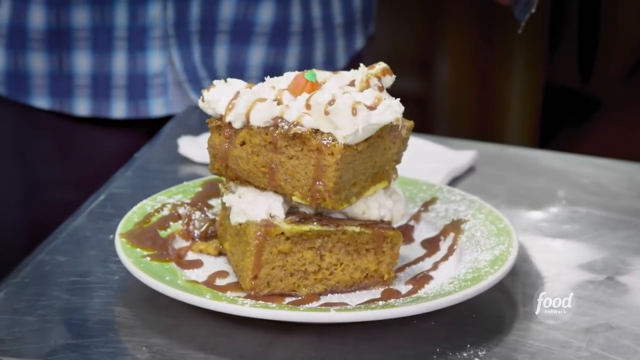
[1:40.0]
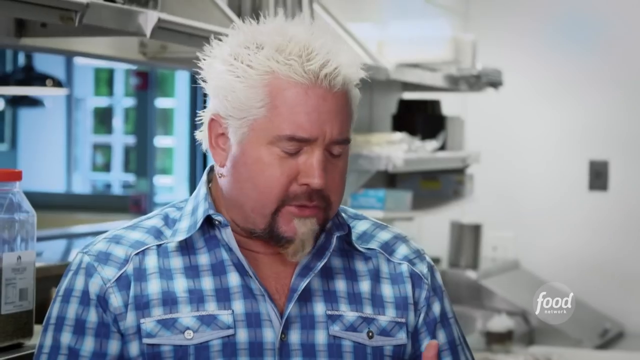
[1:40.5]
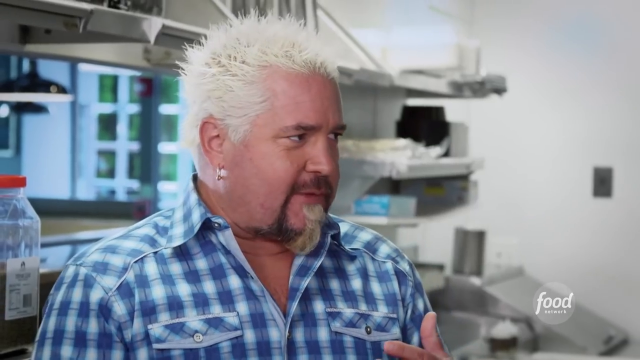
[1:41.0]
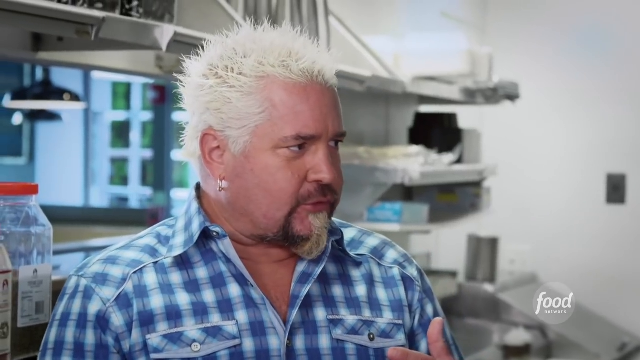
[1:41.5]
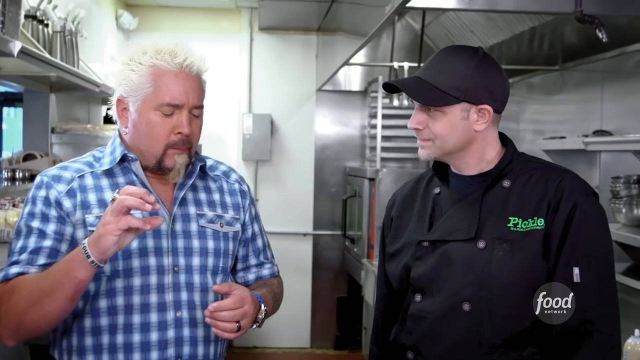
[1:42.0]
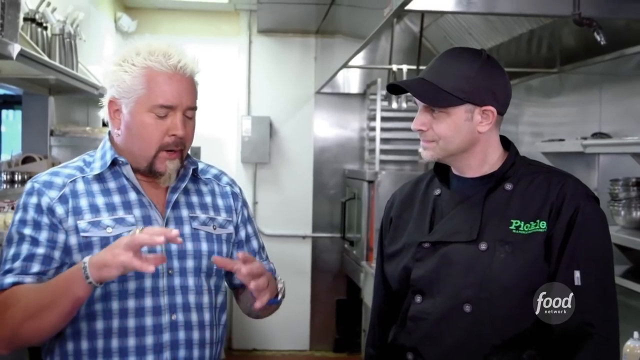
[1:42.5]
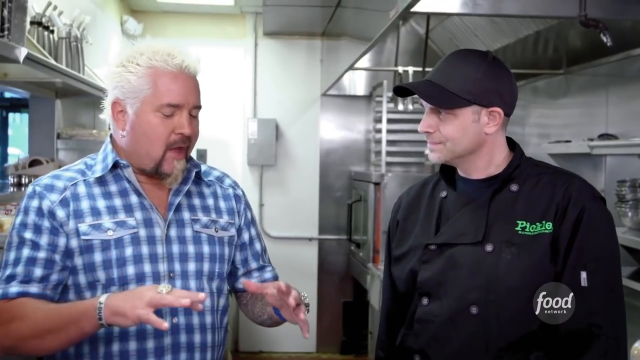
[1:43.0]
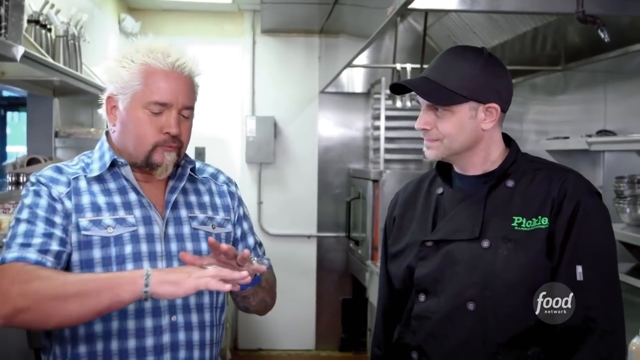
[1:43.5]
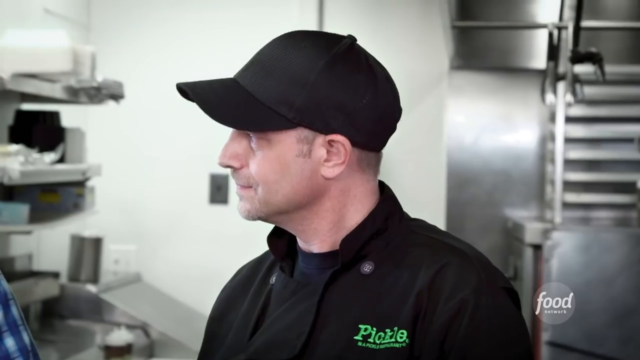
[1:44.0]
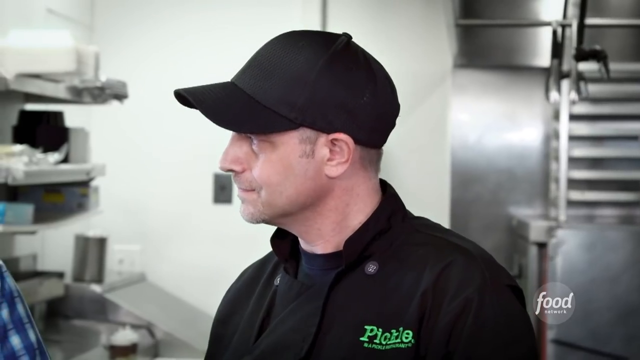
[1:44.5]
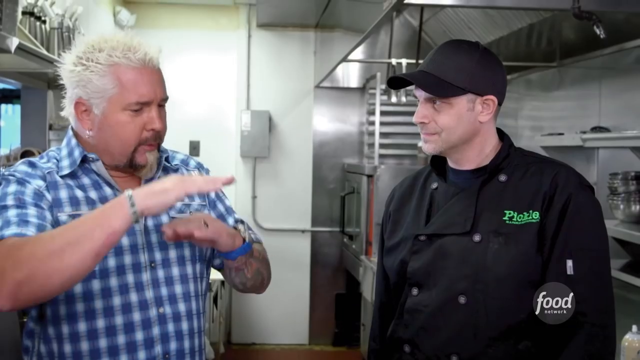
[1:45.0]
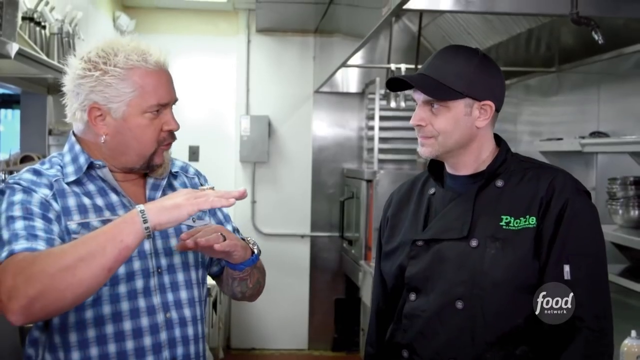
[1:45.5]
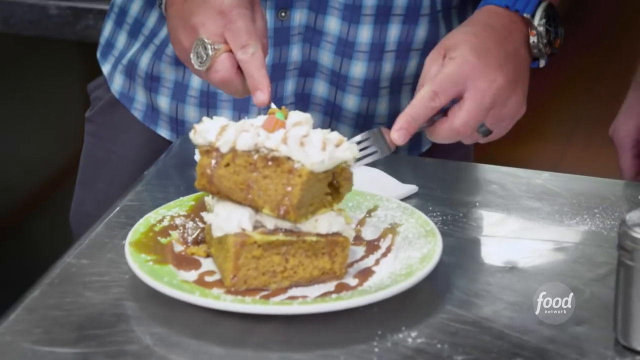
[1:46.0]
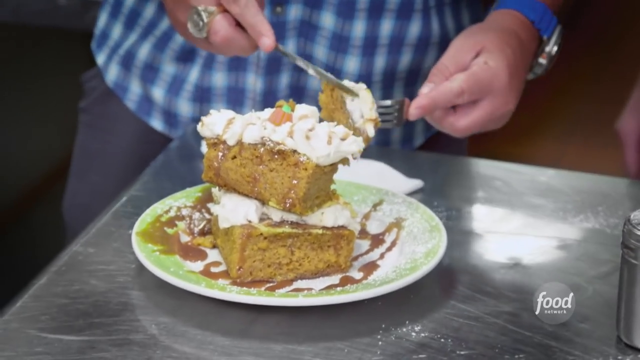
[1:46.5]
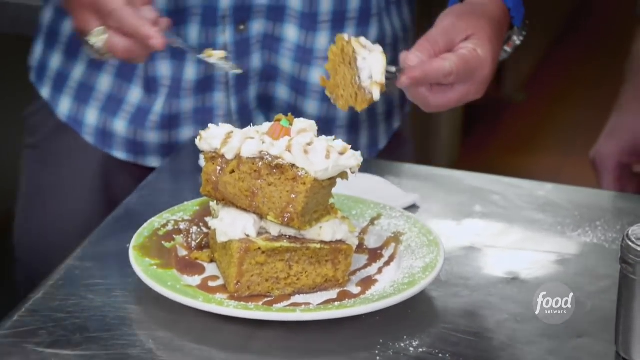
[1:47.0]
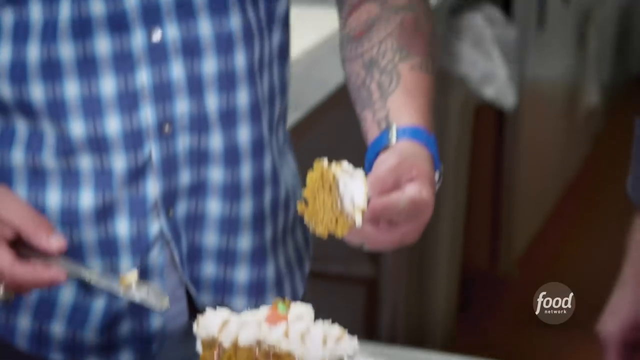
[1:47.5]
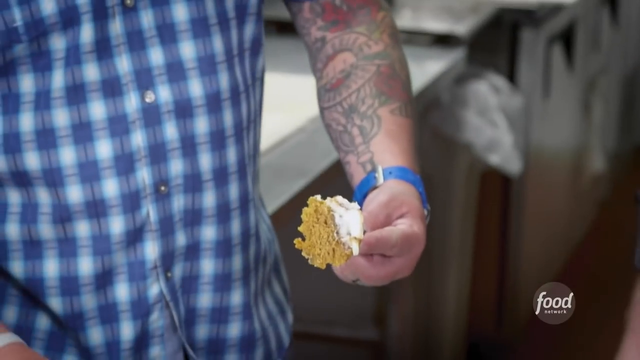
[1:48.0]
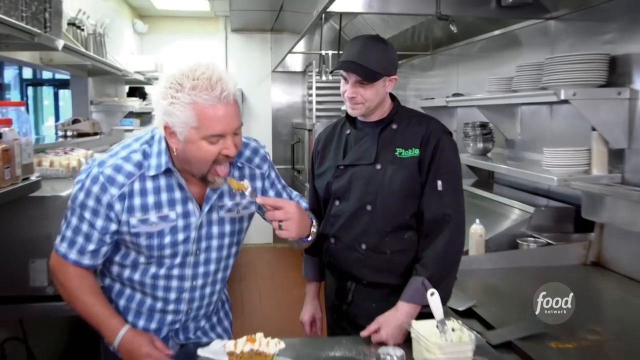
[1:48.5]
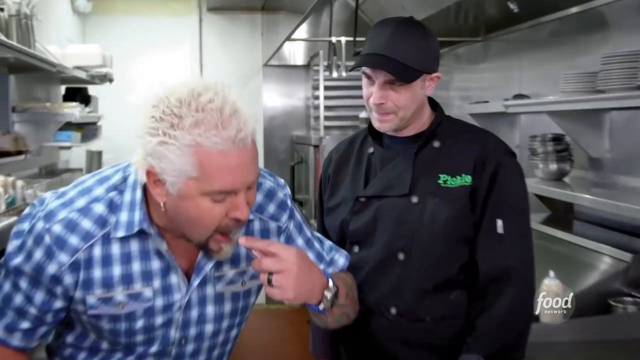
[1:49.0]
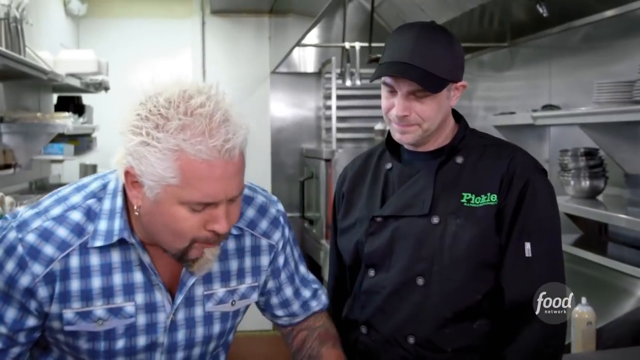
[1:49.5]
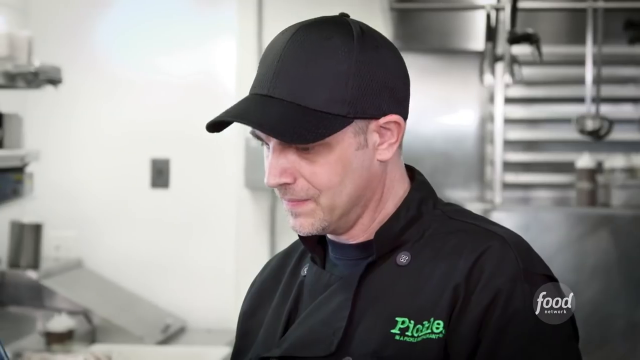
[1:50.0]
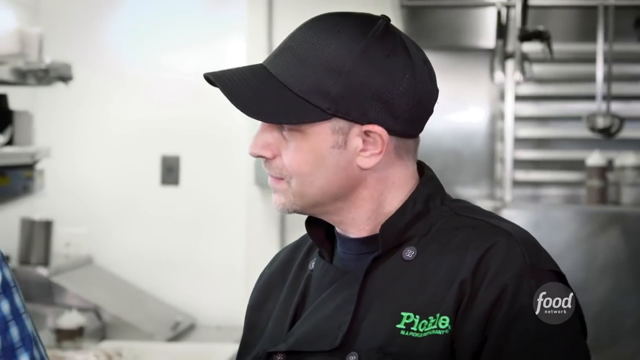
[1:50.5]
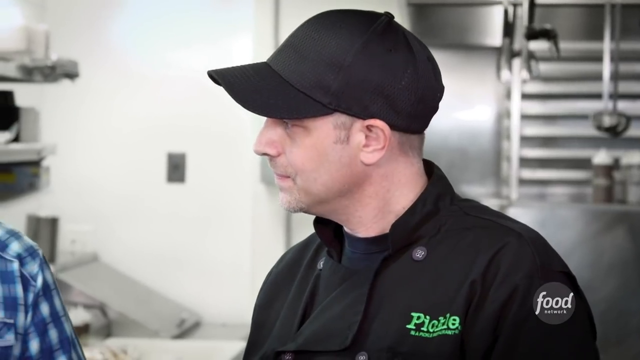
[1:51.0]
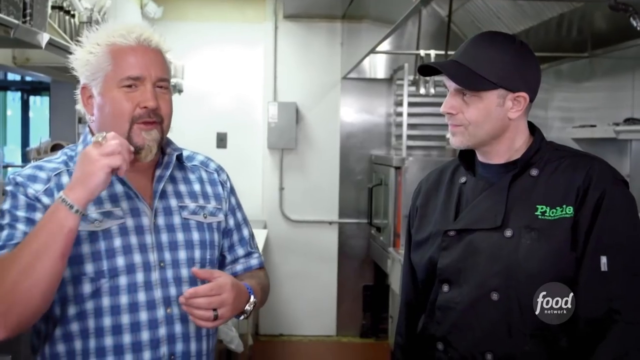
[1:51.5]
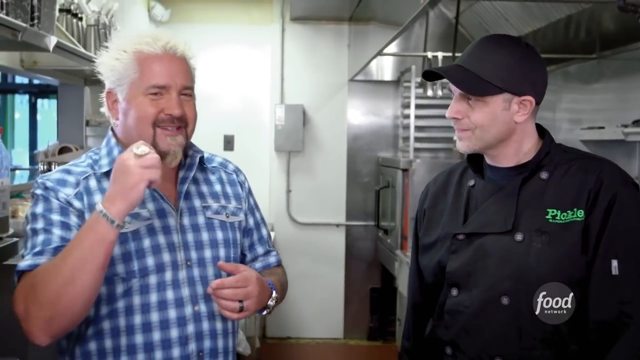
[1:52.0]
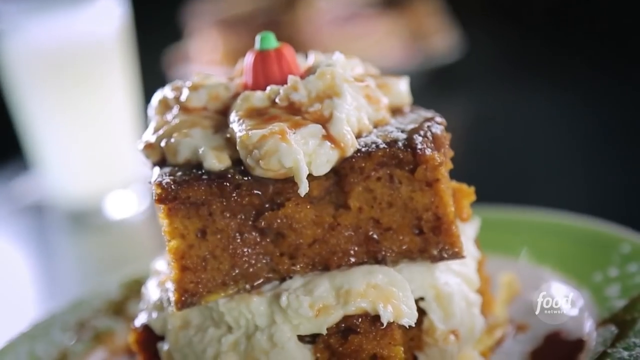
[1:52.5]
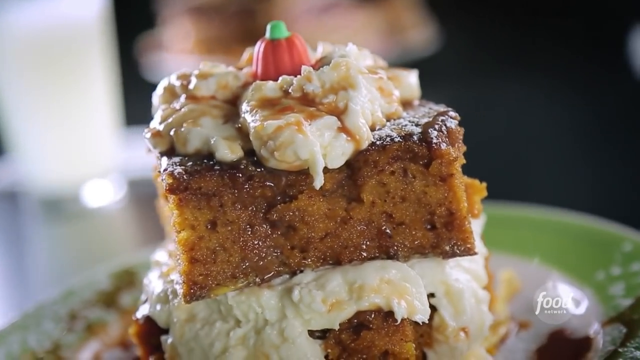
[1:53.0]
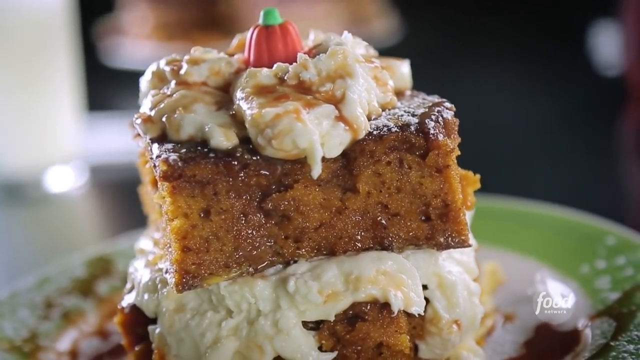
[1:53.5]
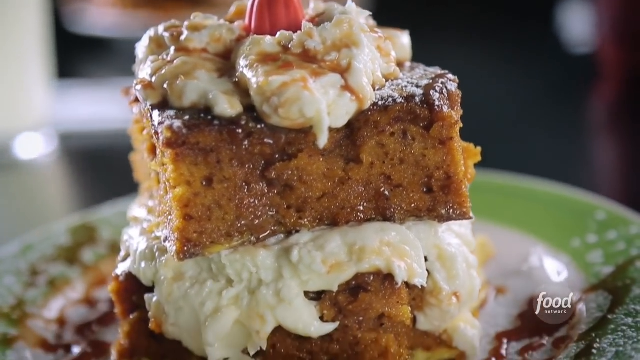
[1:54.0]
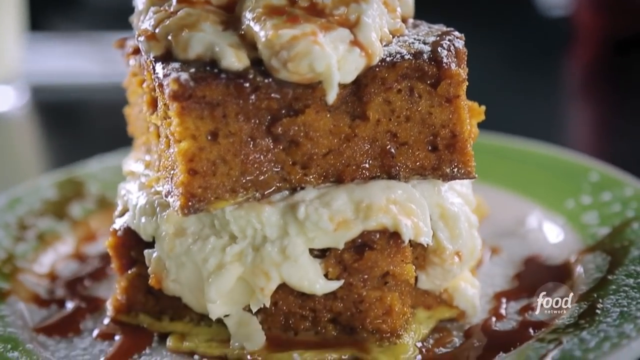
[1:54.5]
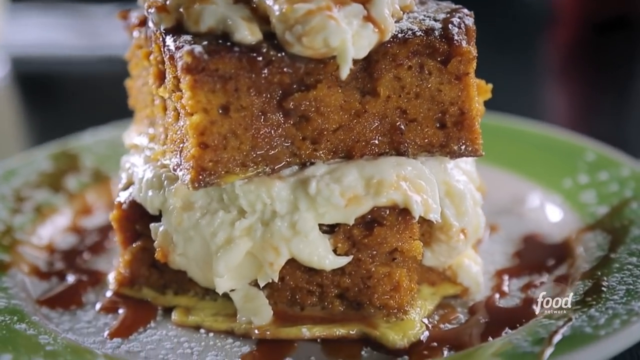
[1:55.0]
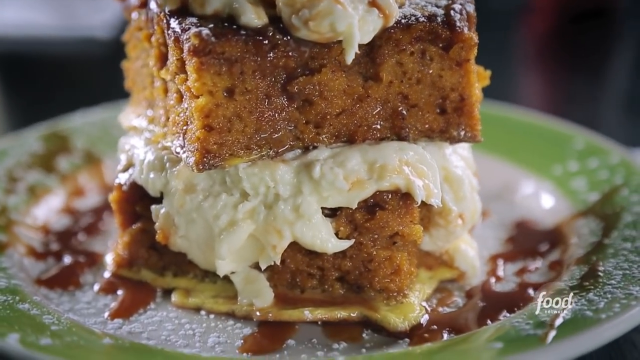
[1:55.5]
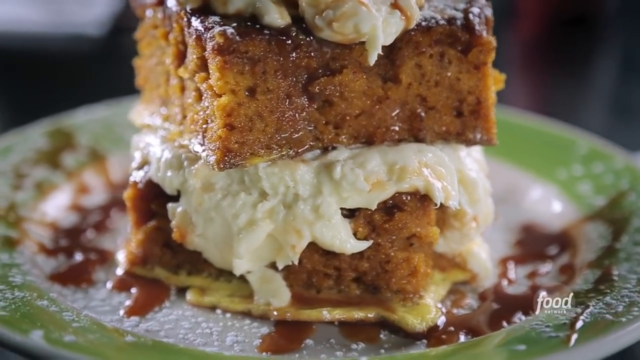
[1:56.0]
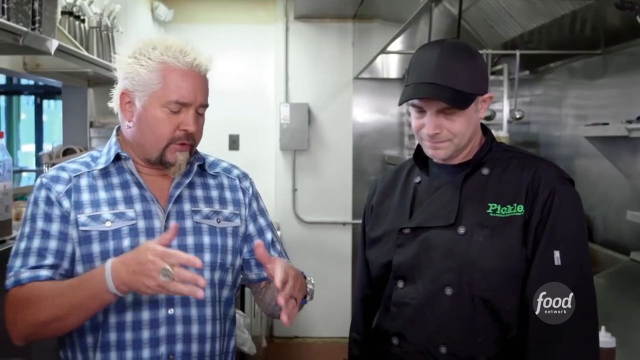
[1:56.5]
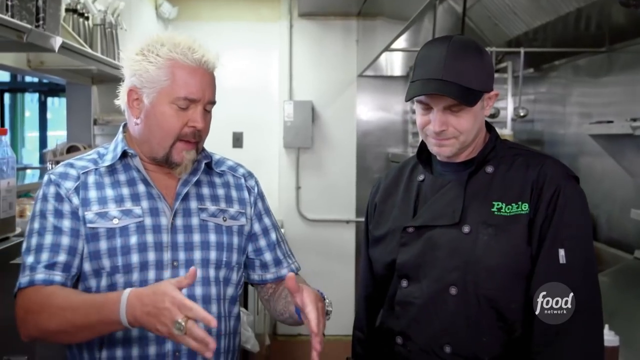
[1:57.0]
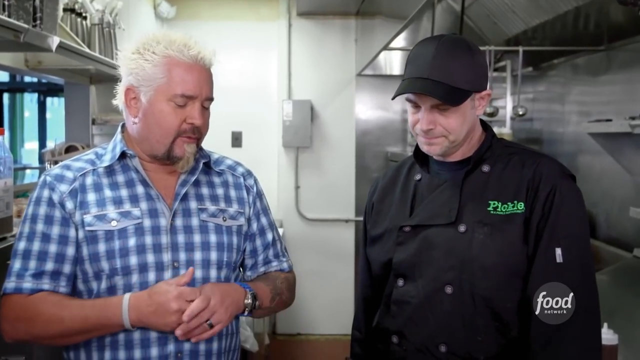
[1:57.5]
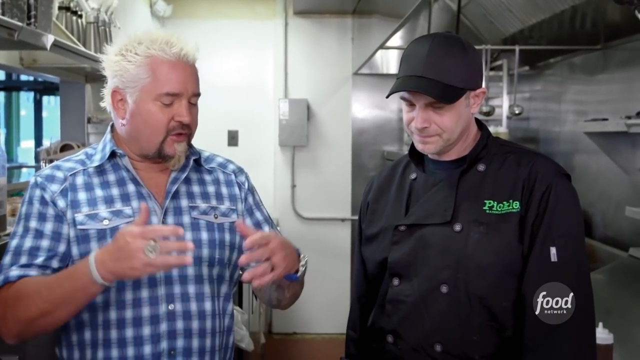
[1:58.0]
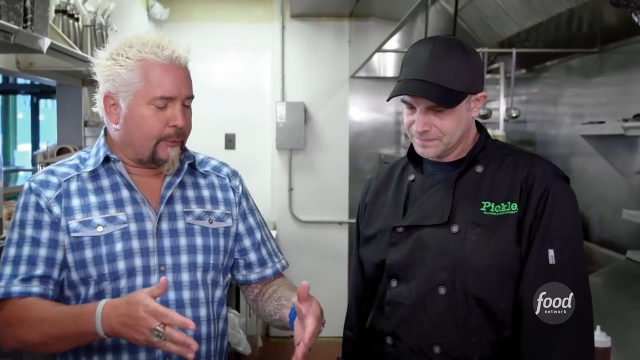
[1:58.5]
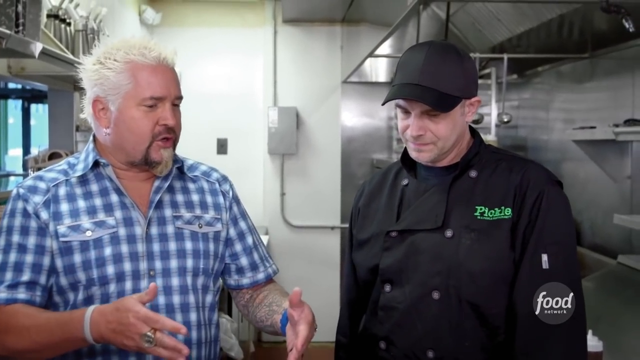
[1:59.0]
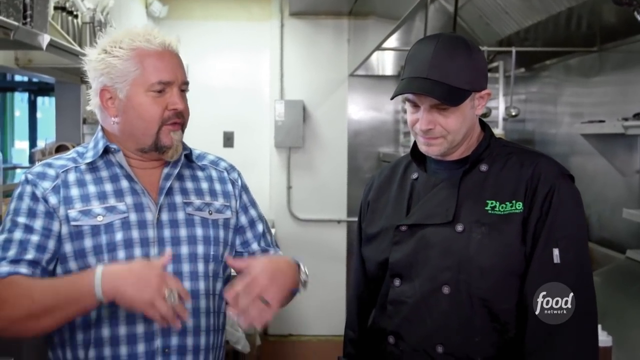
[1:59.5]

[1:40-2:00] The finished cake is shown; Guy Fieri has taken a bite and is excited to eat more. The cake is very moist, covered in two layers of frosting, with two slices stacked on top of one another. The plate is drizzled with caramel that has hardened, and powdered sugar is dusted all over the rim of the plate. The presentation looks elegant but also messy.